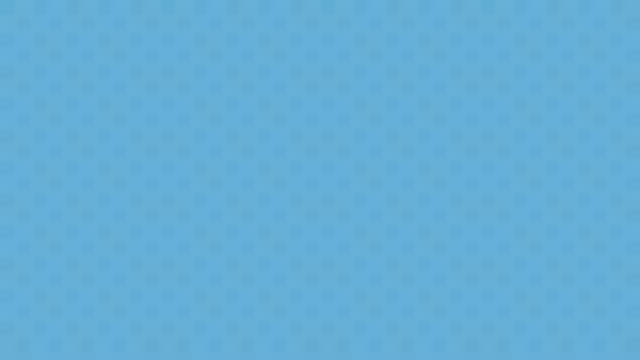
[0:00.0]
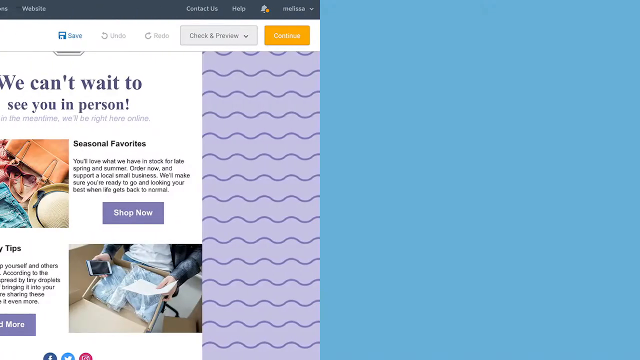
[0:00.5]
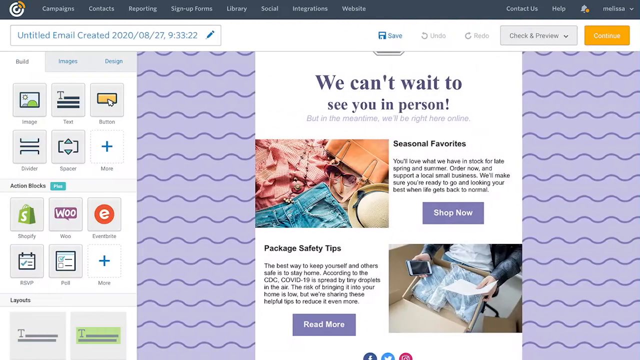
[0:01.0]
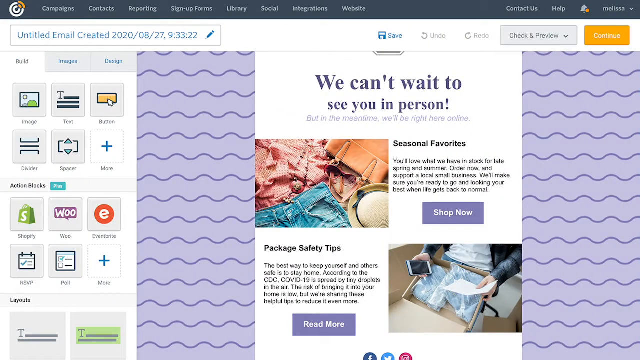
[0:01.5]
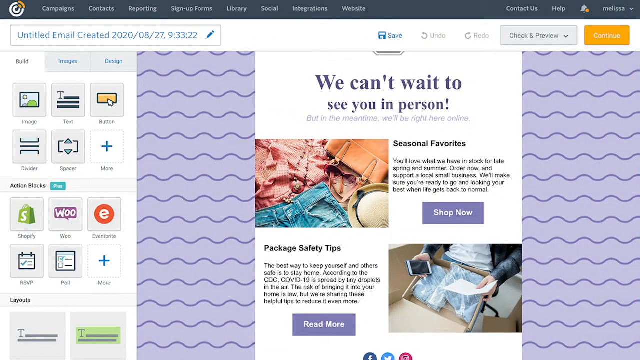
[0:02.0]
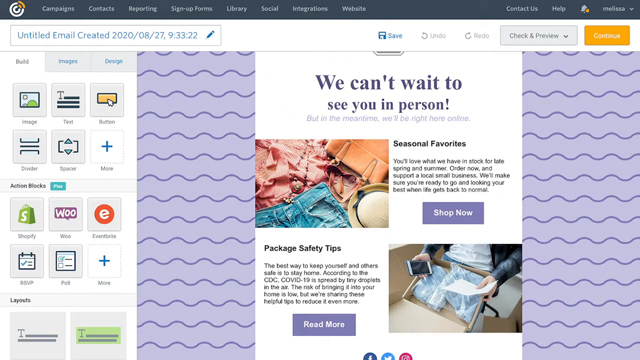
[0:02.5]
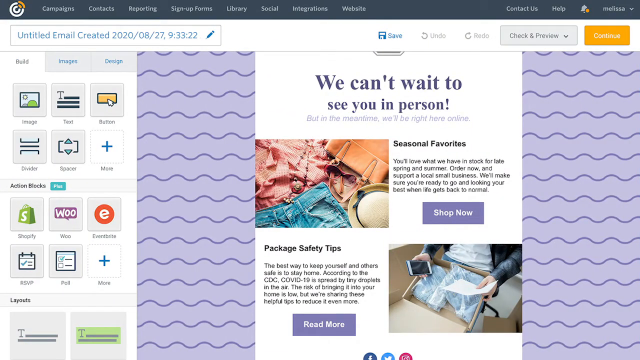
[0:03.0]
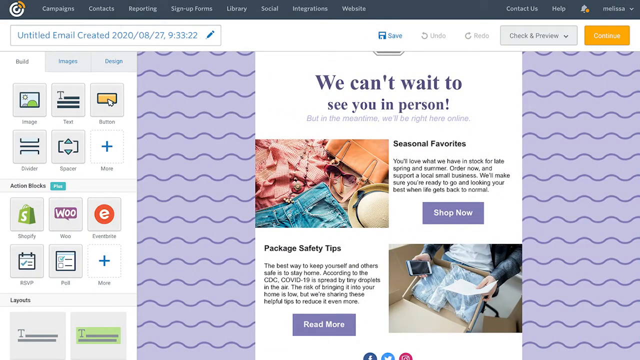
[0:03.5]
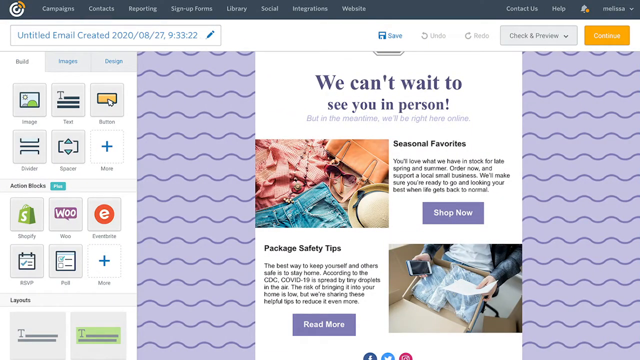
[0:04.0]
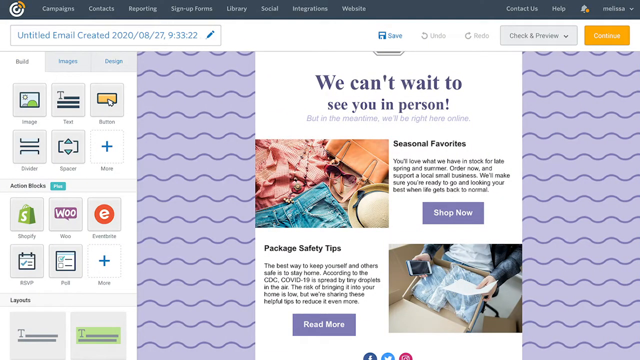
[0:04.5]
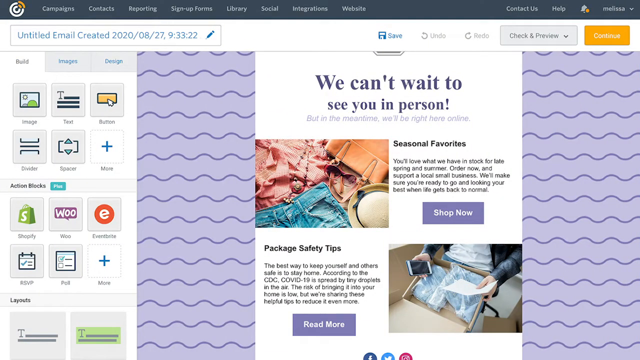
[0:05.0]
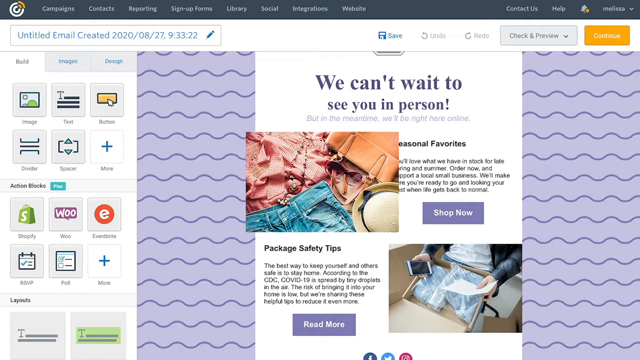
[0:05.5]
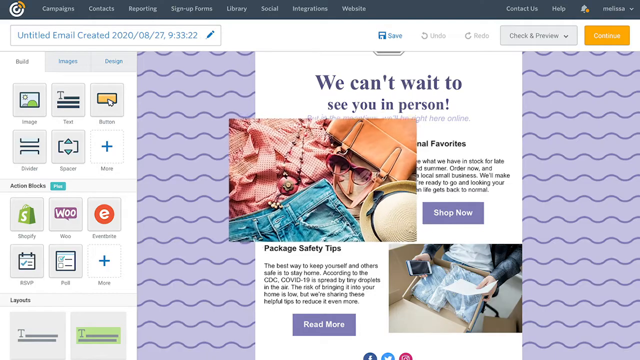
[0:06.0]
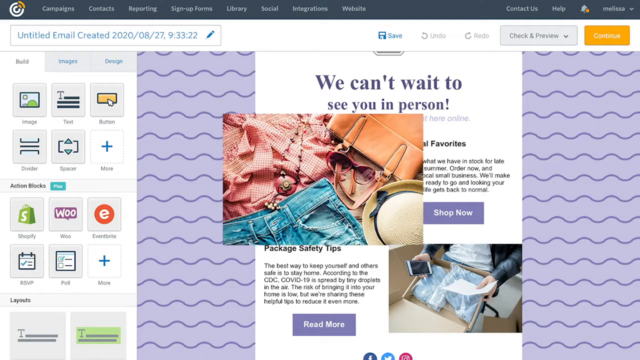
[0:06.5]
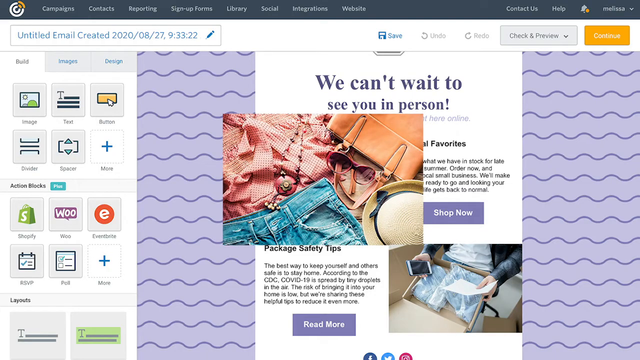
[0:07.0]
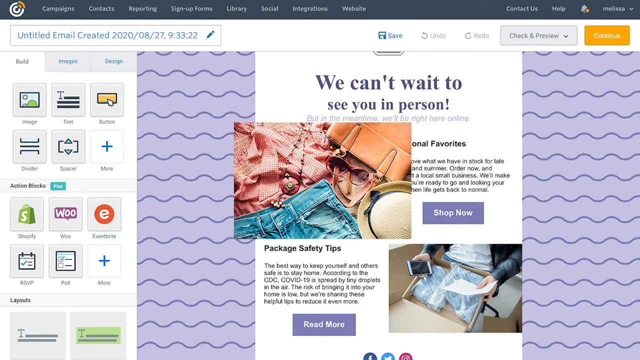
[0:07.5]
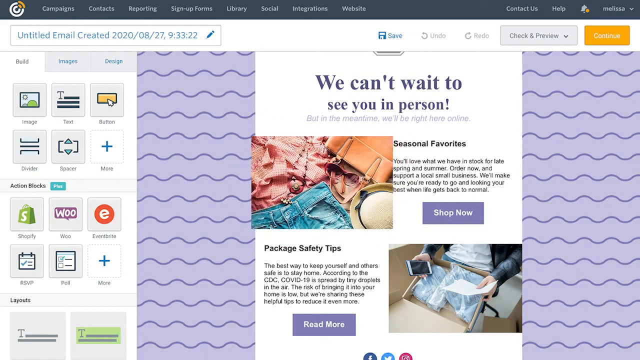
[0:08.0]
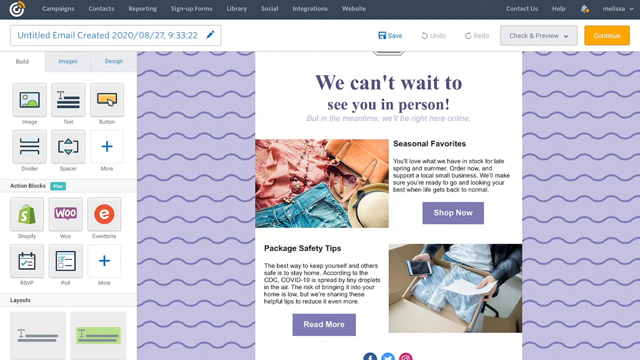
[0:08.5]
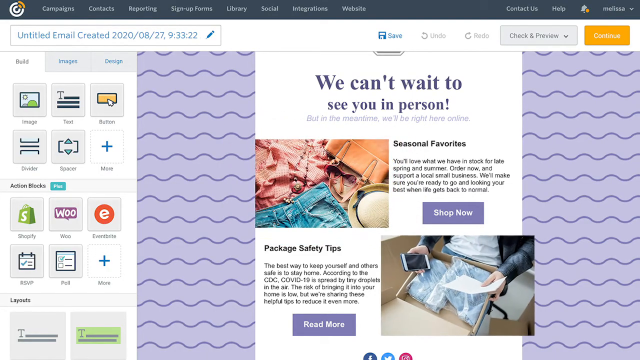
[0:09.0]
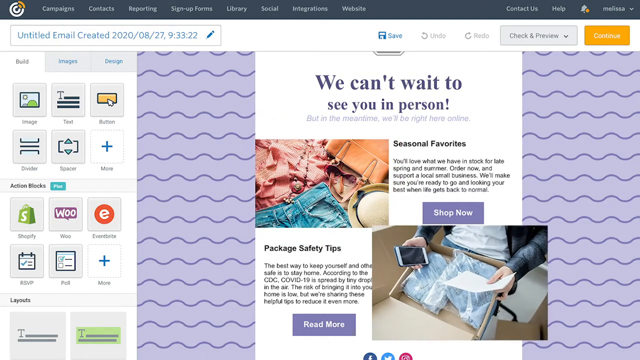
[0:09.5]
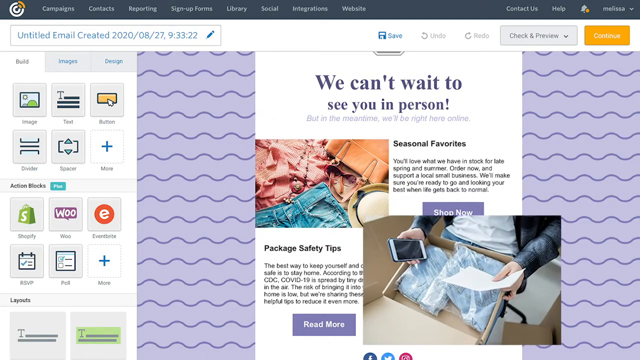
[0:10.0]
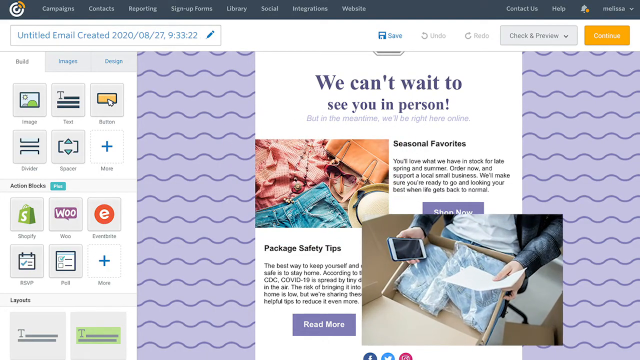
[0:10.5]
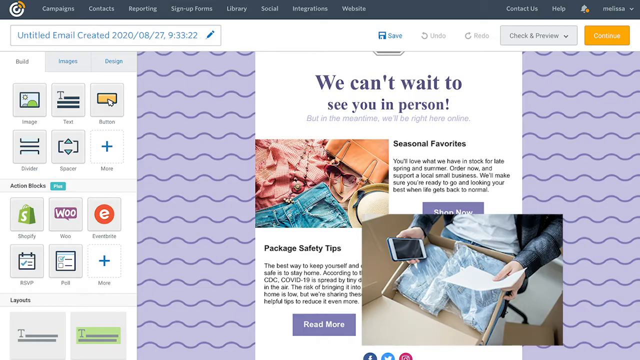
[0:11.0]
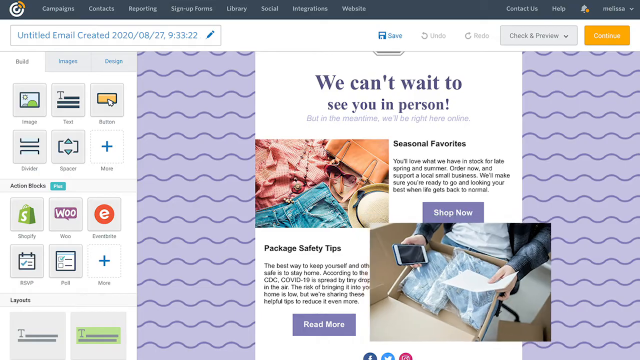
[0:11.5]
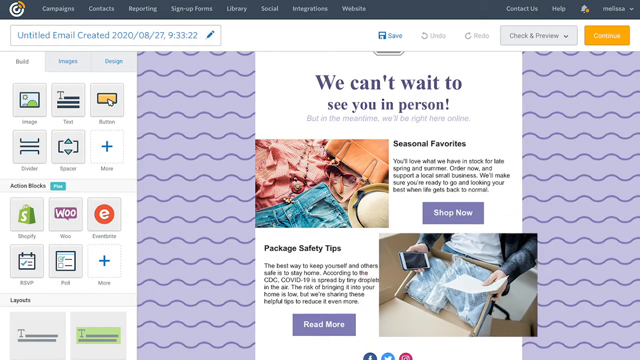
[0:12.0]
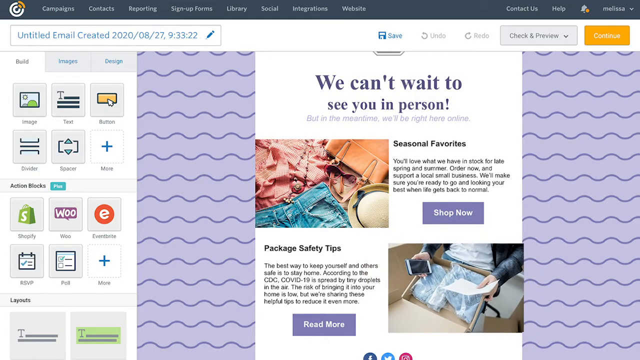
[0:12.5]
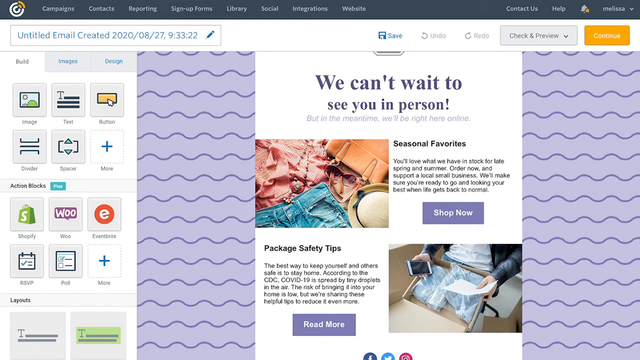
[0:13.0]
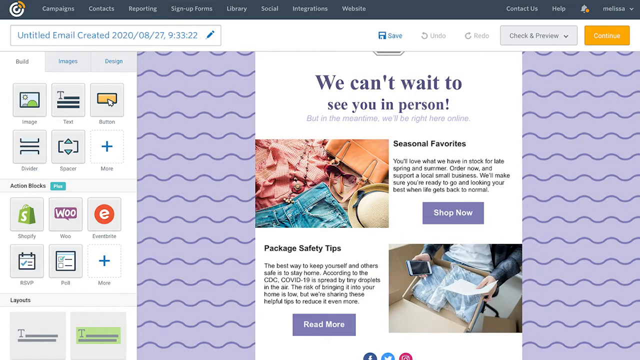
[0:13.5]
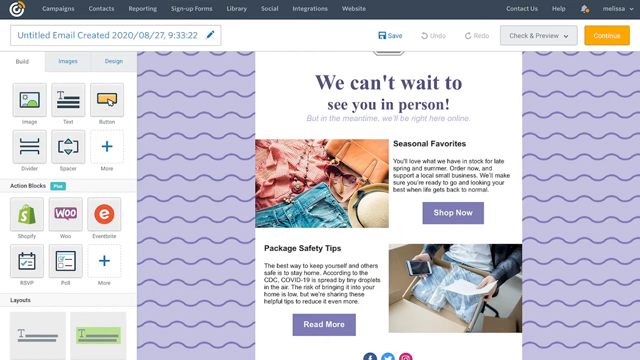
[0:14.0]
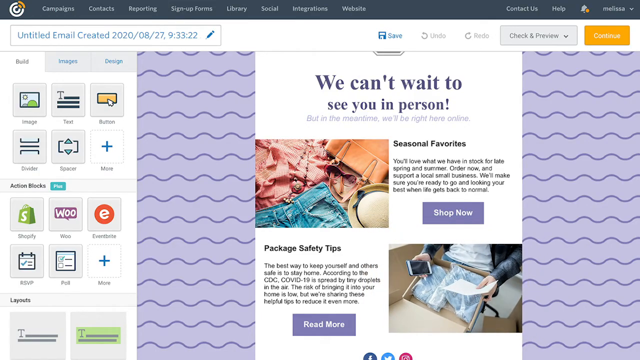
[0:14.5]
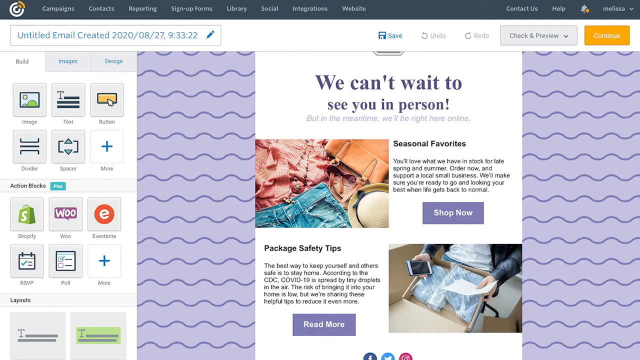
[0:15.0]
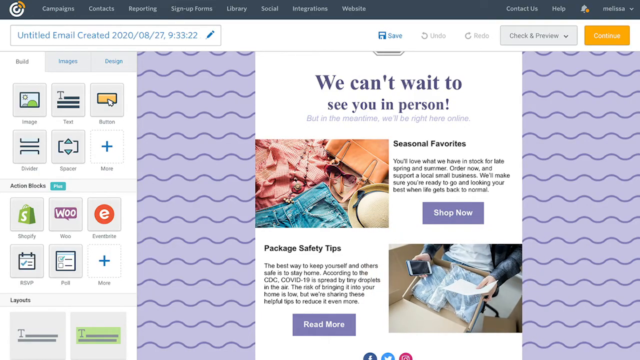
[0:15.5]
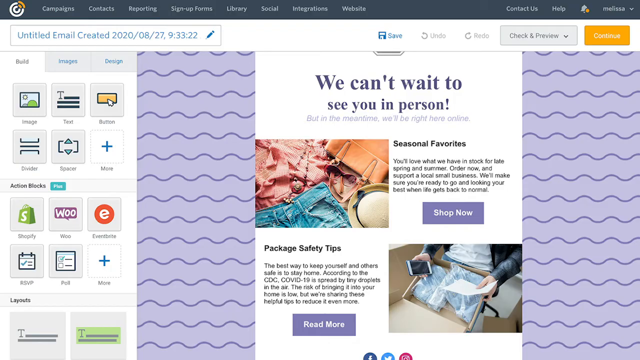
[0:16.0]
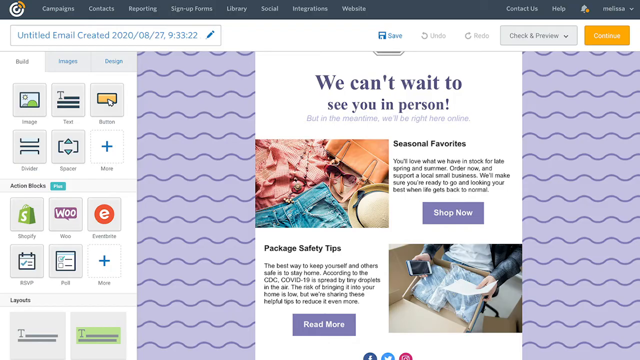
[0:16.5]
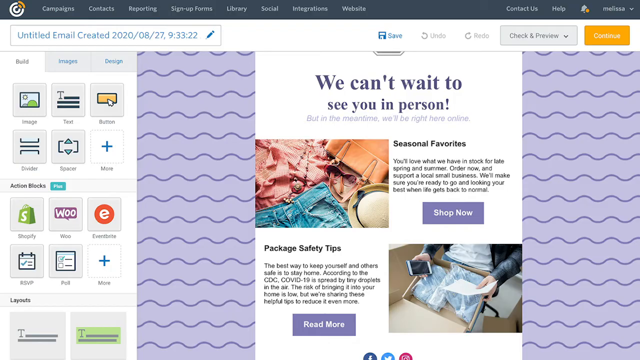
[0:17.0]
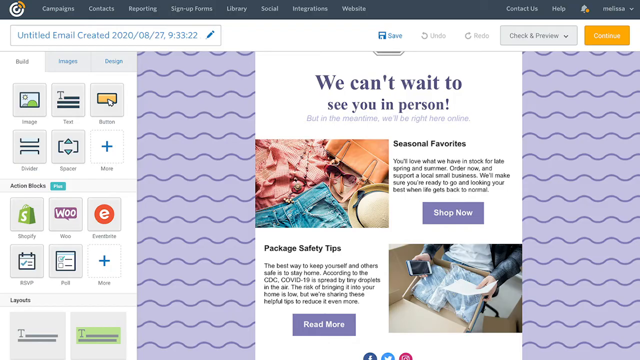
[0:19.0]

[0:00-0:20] The video opens on a completely blue screen with nothing else on it. The main image then slides in from the left, showing some sort of platform that looks like it is for an email blast. Text reads "untitled email created 2020, August 27th at 9.33". On the left-hand side are several options for adding an image, text, a button, or action blocks, including integrations for Shopify, Eventbrite and another service called Woo, plus options to let the reader RSVP or respond to a poll. The main email on the right-hand side looks like it is for a store, and it reads "we can't wait to see you in person, but in the meantime, we'll be right here online."